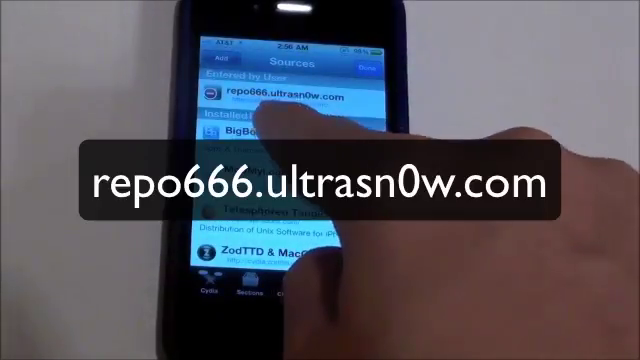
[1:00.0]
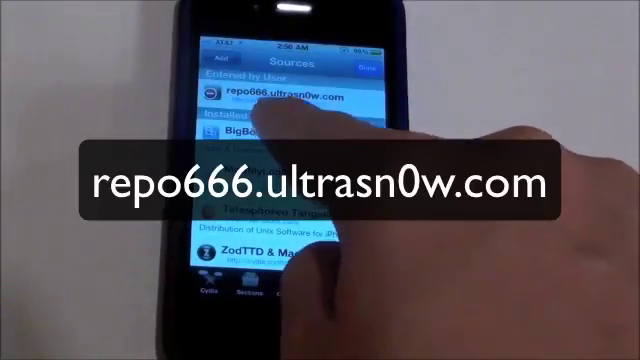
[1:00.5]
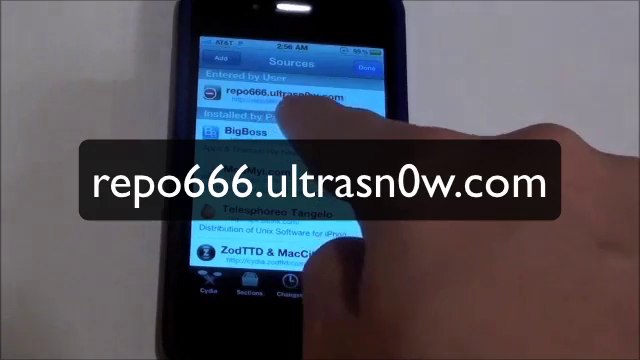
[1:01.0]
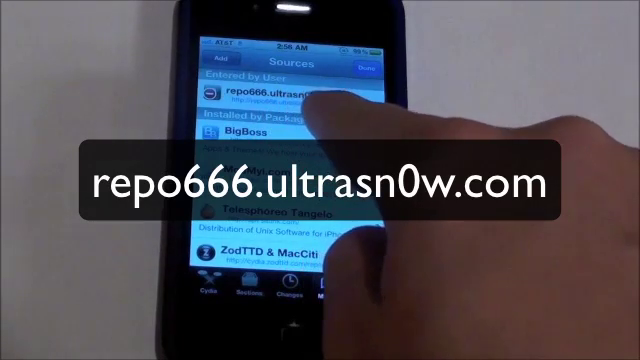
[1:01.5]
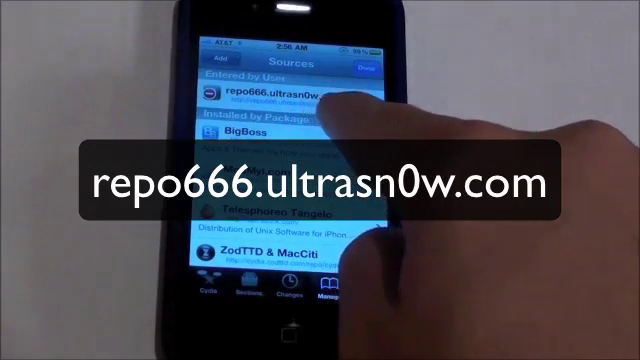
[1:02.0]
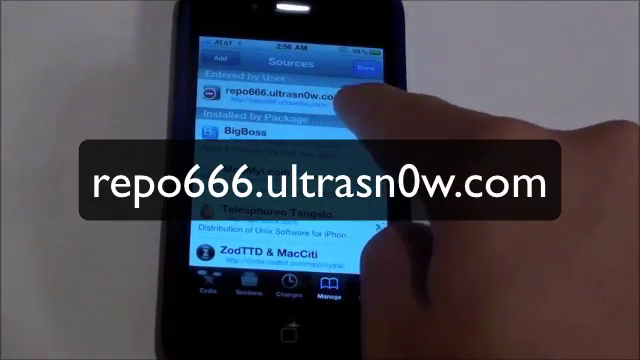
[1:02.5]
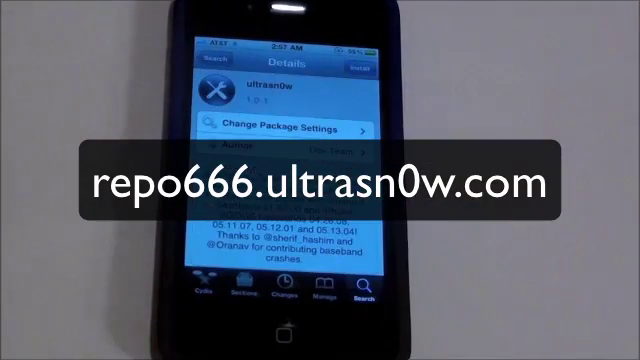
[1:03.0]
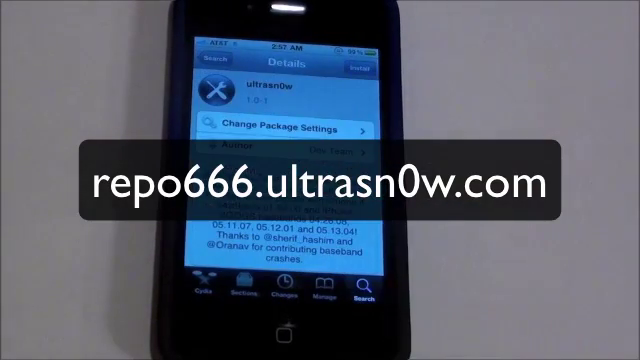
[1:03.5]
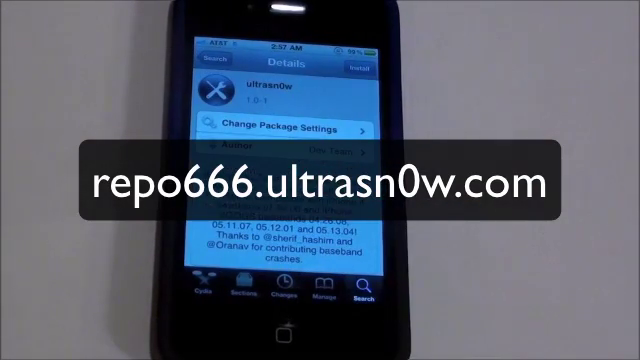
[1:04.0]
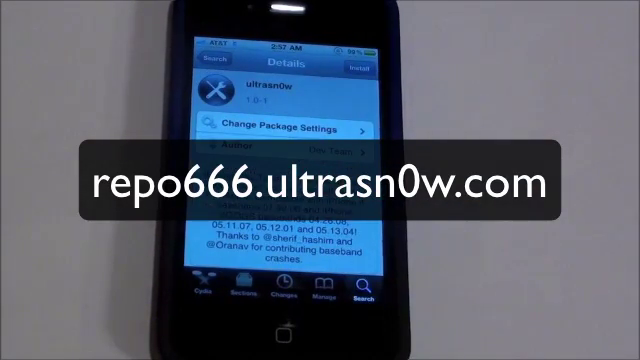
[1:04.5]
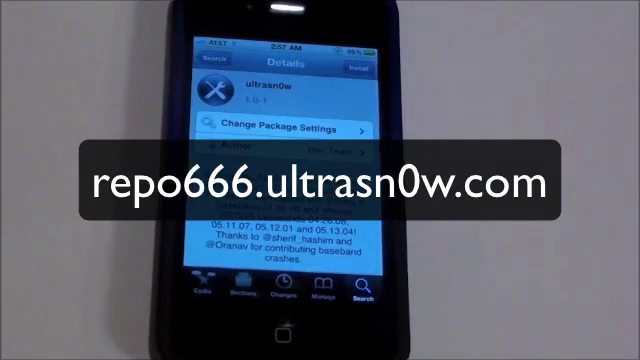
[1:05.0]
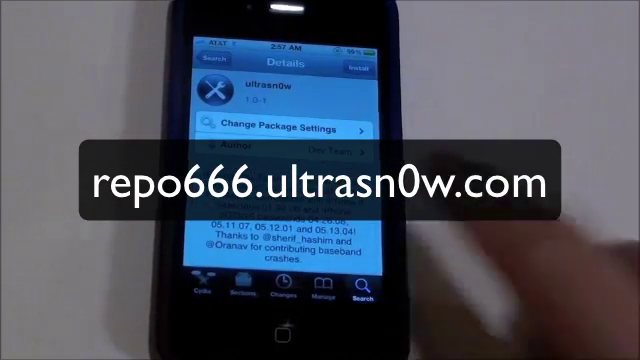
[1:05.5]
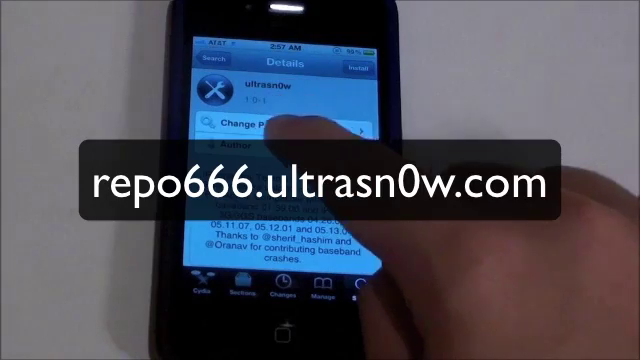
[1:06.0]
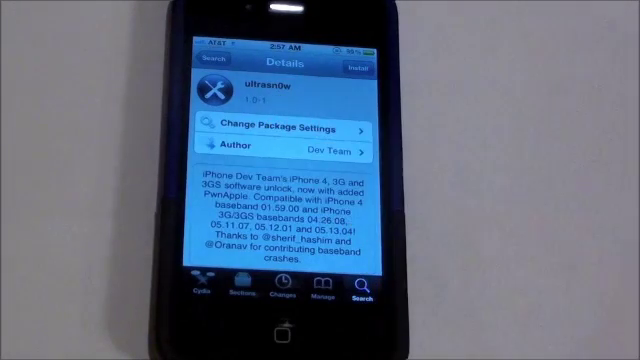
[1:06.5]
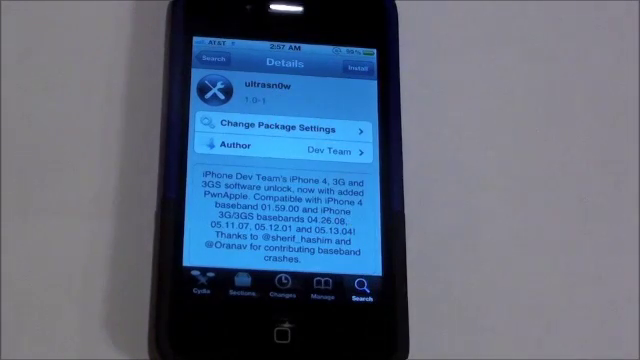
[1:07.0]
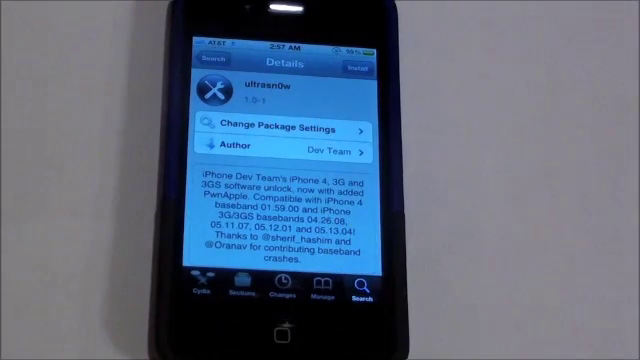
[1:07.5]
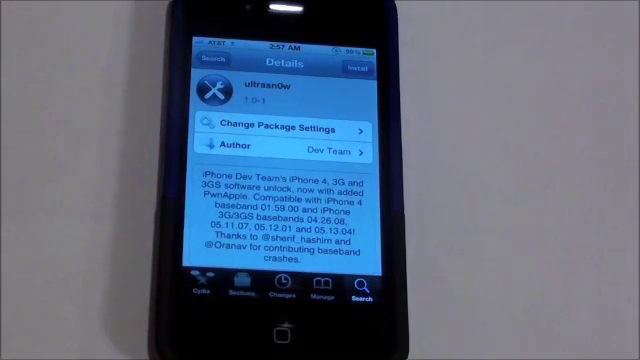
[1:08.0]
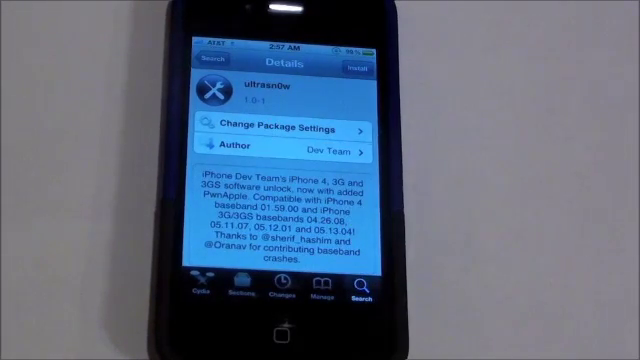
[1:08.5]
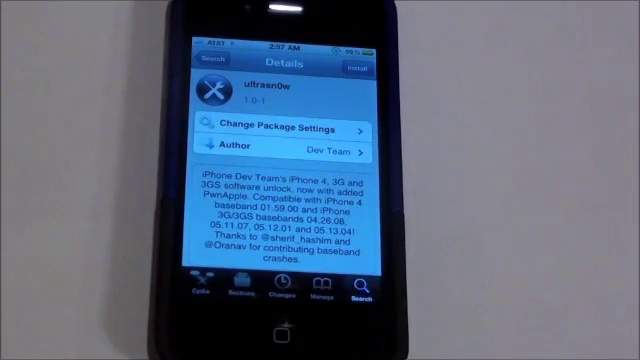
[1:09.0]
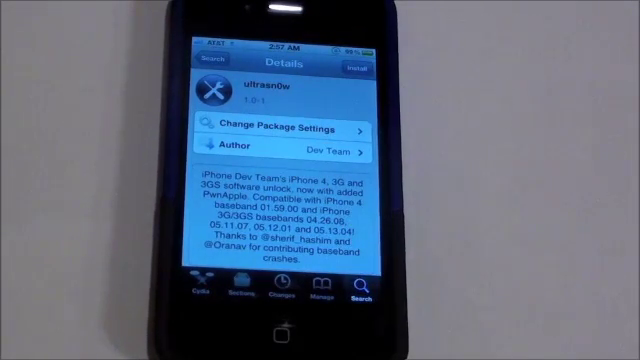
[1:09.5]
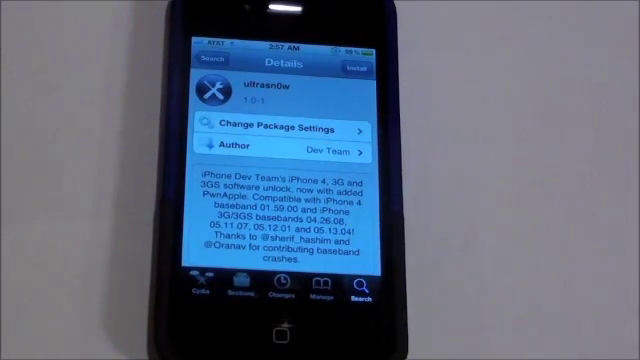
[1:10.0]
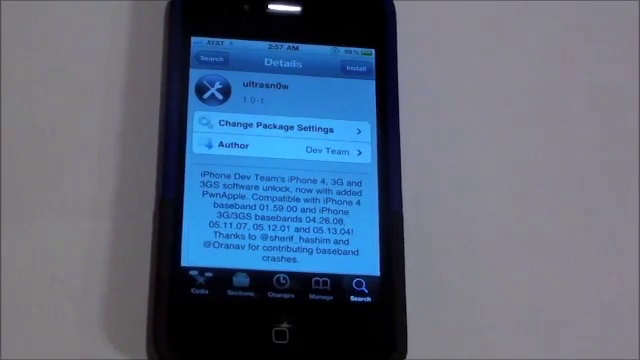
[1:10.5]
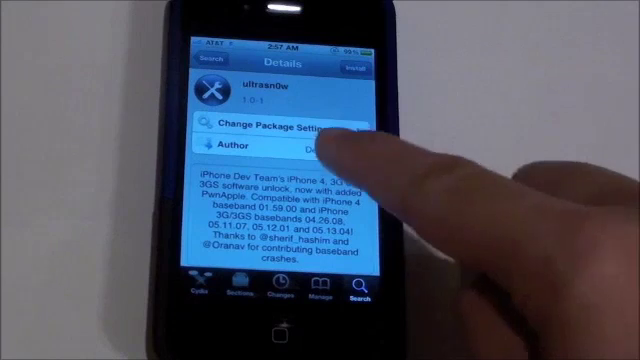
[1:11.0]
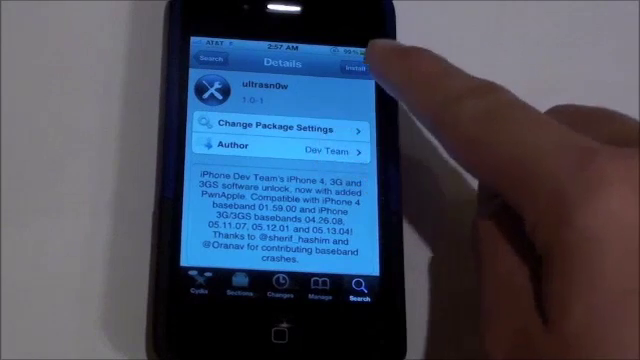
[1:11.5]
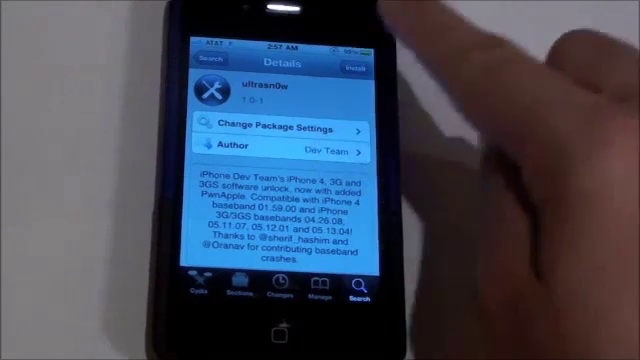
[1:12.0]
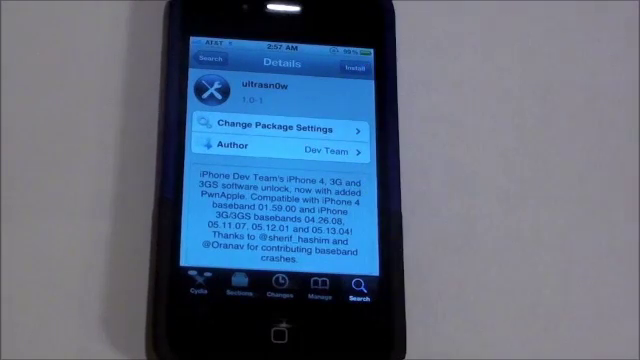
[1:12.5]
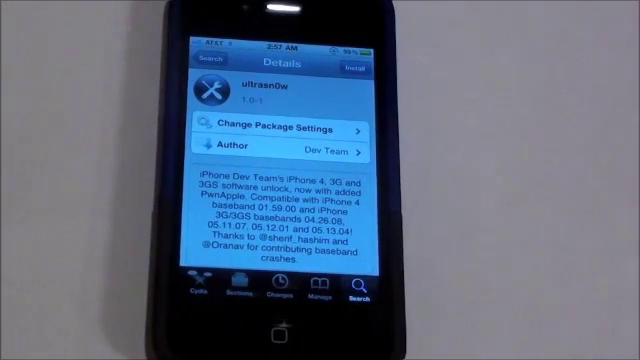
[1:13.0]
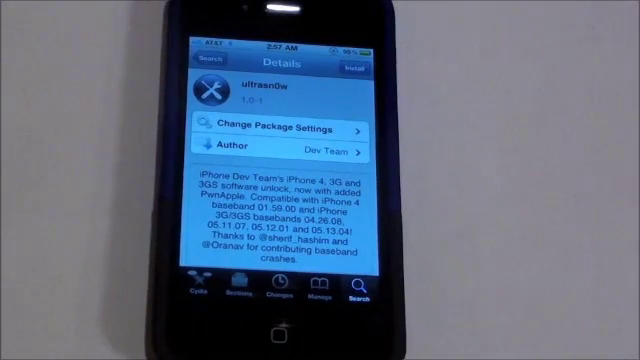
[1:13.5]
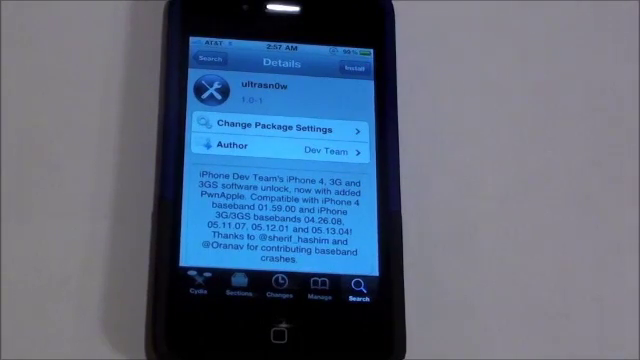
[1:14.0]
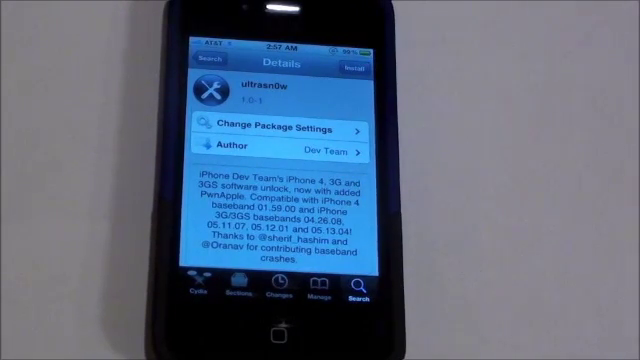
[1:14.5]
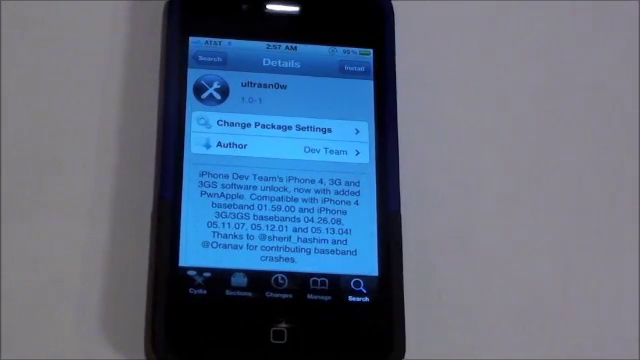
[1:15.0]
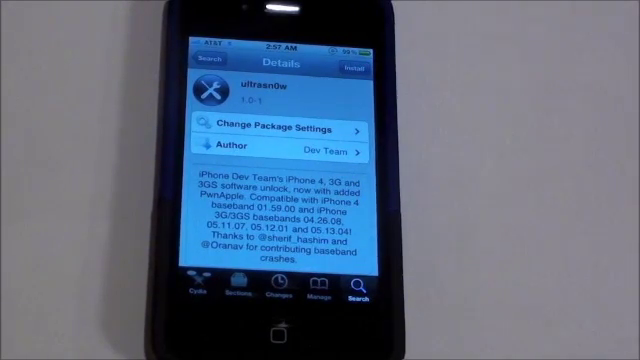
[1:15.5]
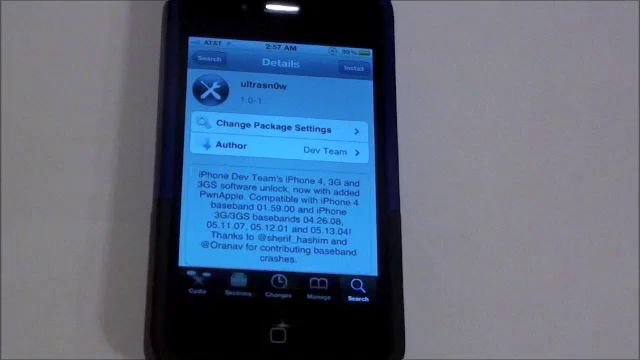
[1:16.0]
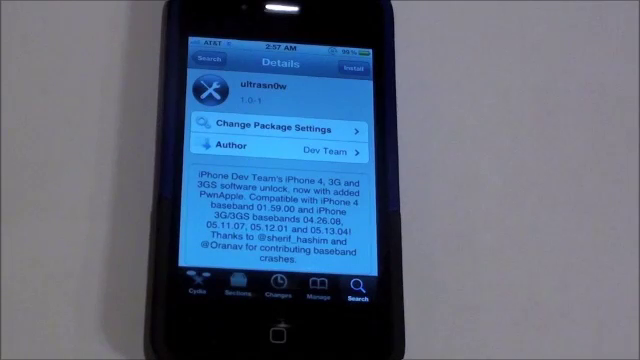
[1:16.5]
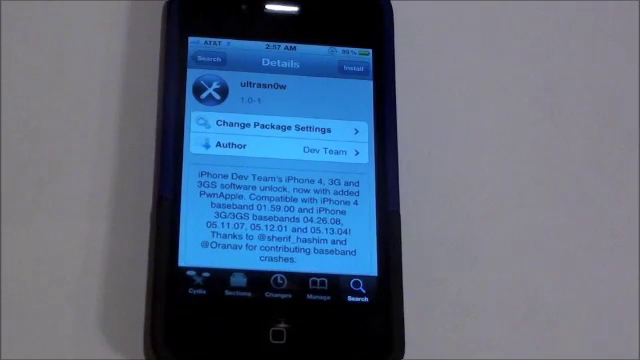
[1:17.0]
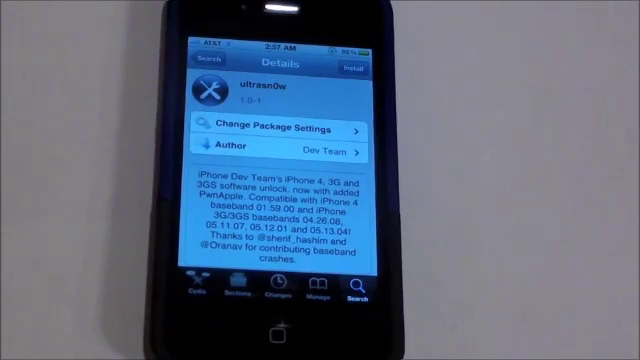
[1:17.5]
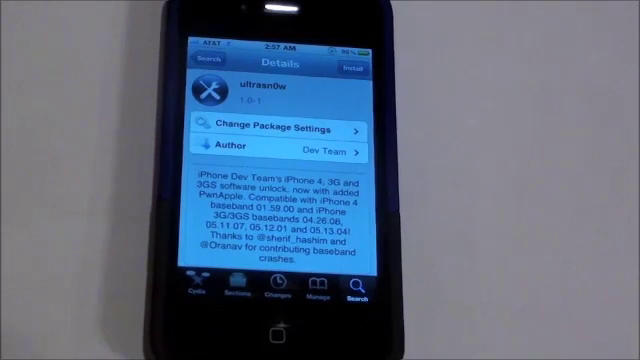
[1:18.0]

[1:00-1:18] The cell phone rests in the center of a light gray background. Its screen reads "sources" and below that "repo666ultrasan0w.com", and the finger points at this address on the phone. The text is projected on the screen in a black box with white lettering; it flashes very quickly and then holds. The hand moves in and out of frame, pointing at various parts of the phone's screen as if pushing buttons without touching it, hovering over various areas and making rapid punching or touching motions. The rest of the phone's screen remains partially visible, showing "Ultrasen now", "change package settings", "author" and "dev team", and an install button. At the bottom of the phone's screen the text "Zod T T D" and "M A C" is visible, but the person's thumb knuckle blocks the remainder of the text.